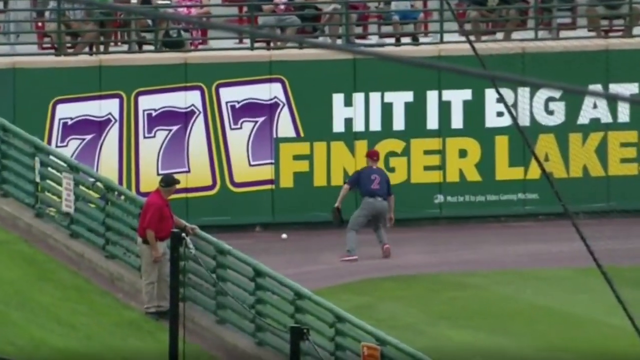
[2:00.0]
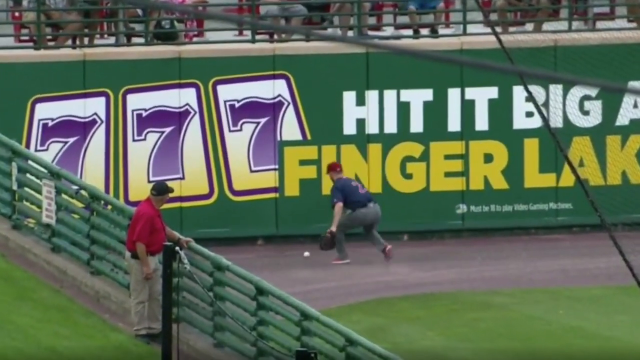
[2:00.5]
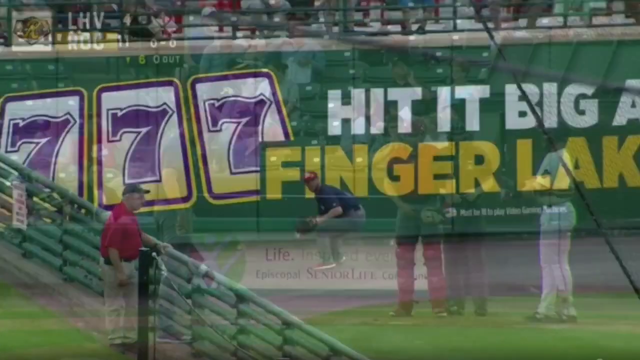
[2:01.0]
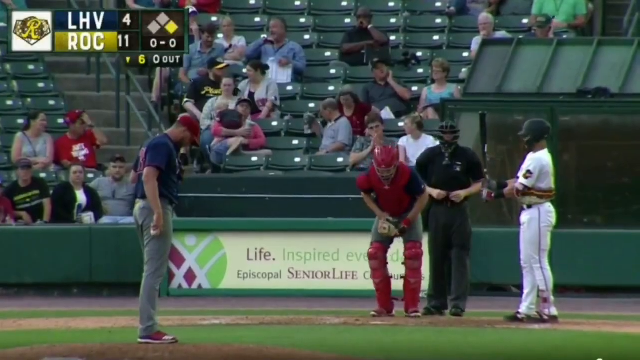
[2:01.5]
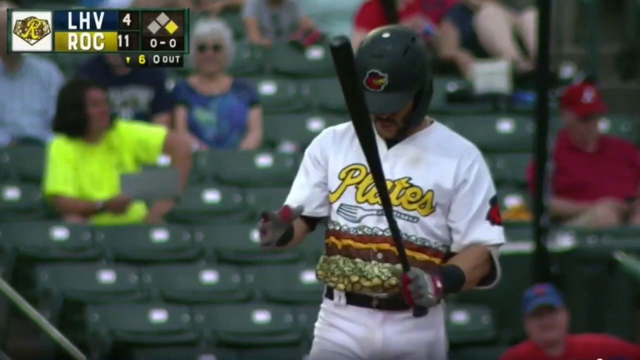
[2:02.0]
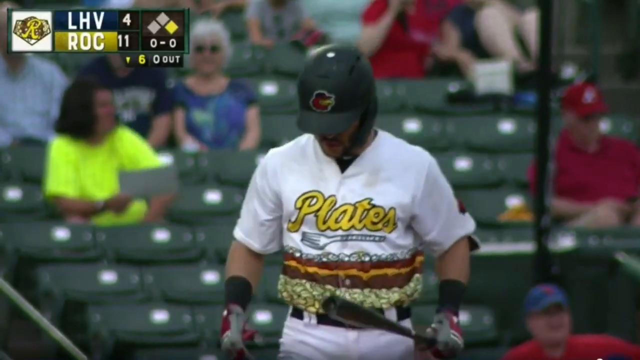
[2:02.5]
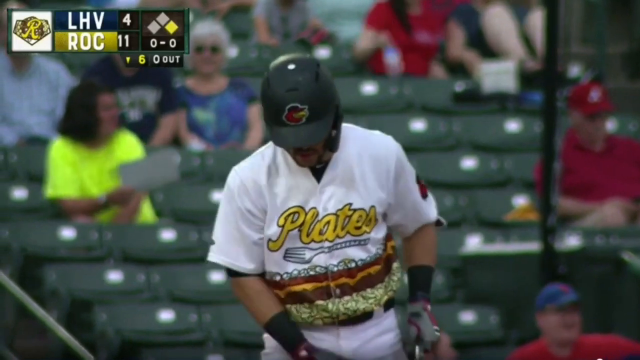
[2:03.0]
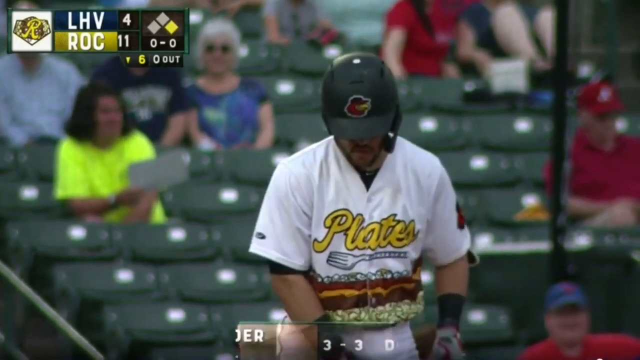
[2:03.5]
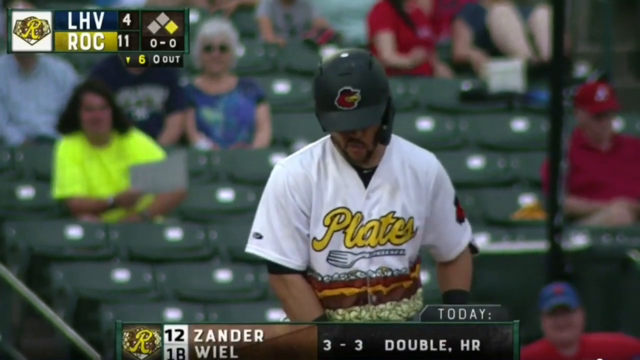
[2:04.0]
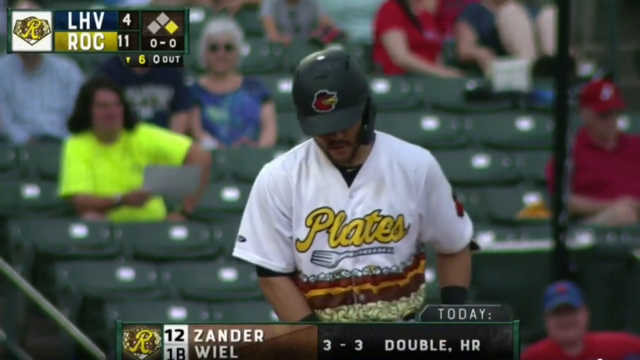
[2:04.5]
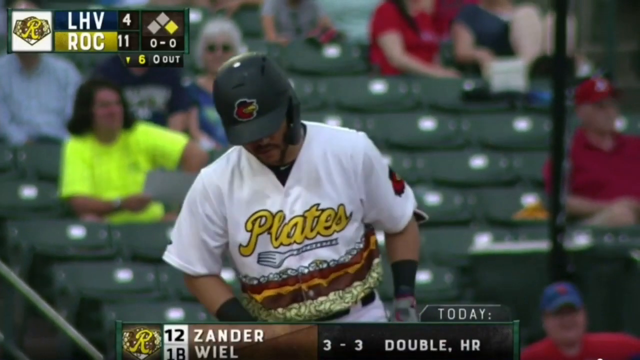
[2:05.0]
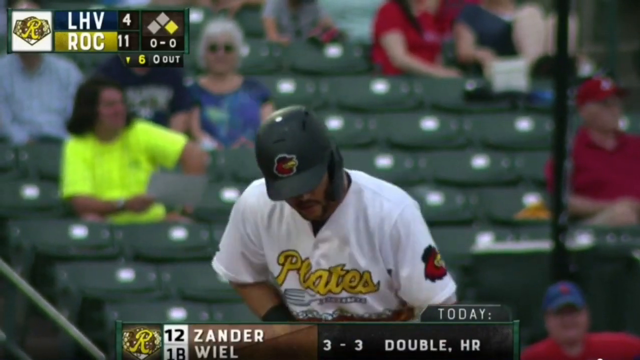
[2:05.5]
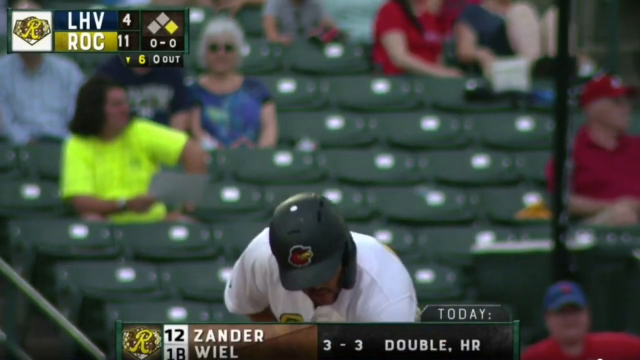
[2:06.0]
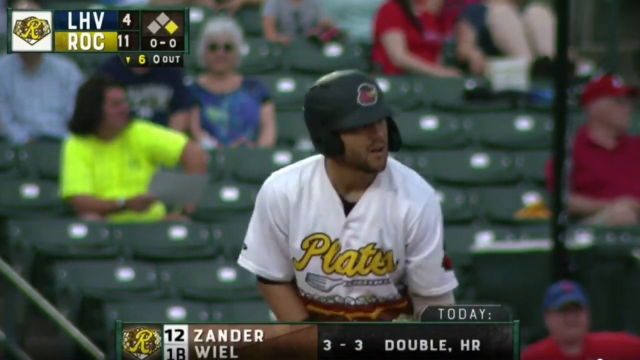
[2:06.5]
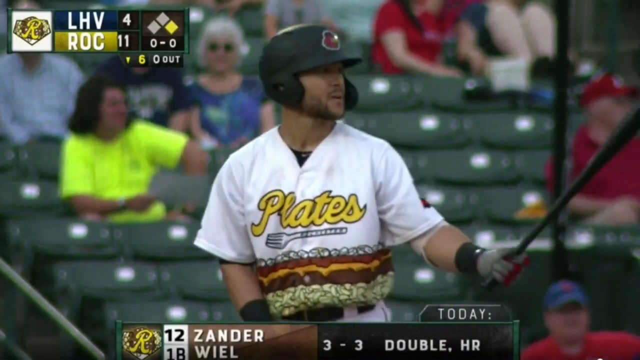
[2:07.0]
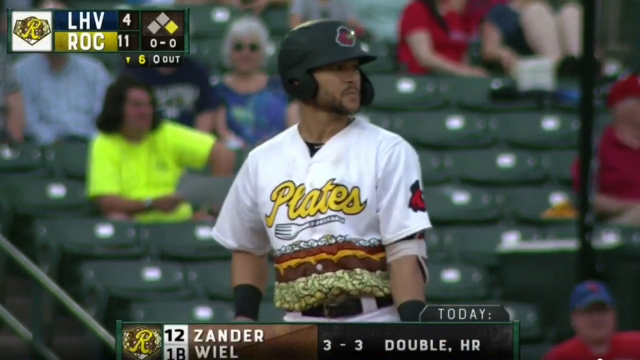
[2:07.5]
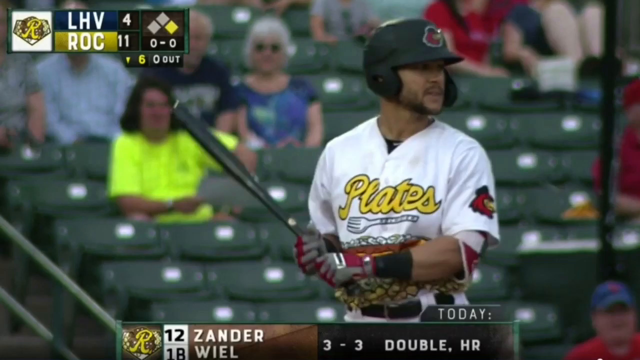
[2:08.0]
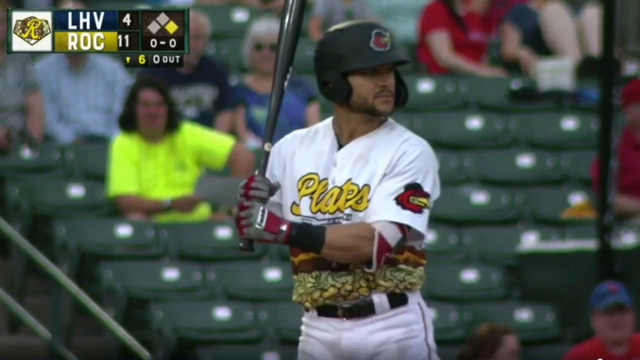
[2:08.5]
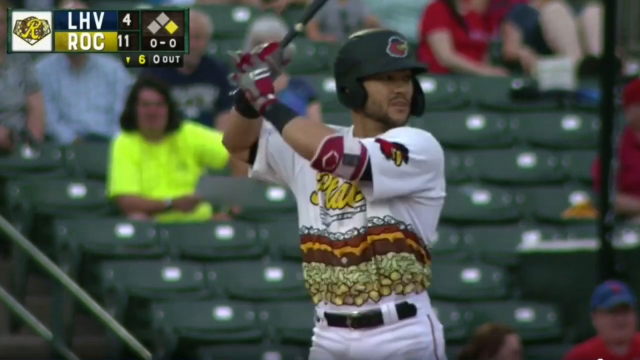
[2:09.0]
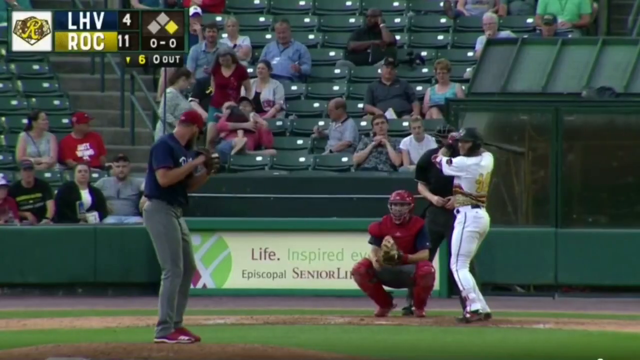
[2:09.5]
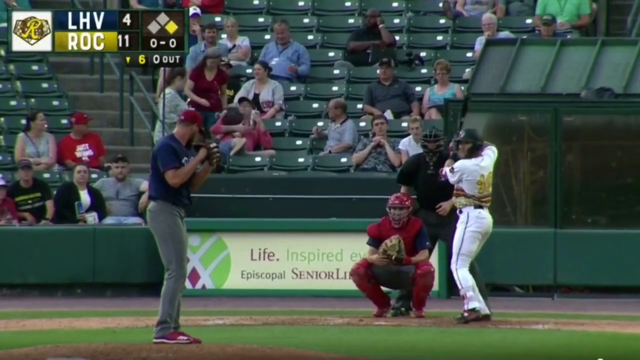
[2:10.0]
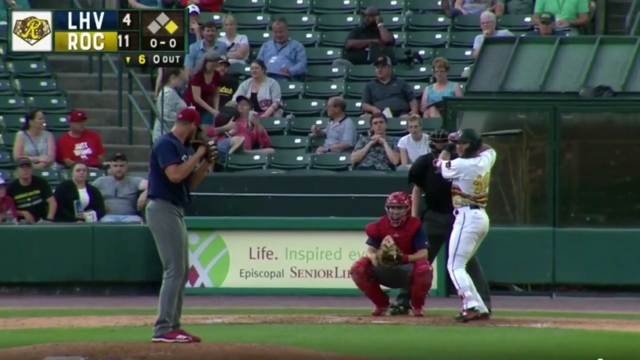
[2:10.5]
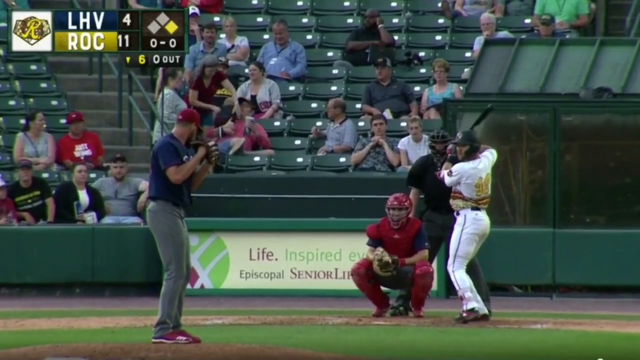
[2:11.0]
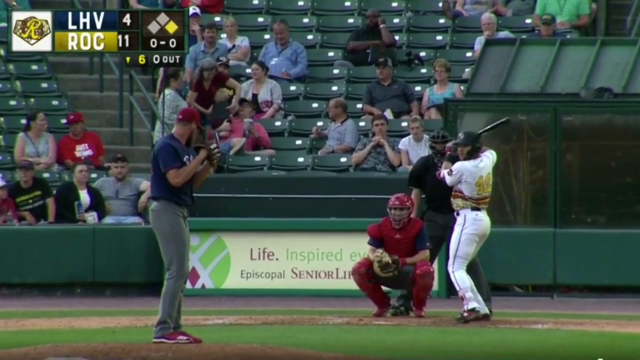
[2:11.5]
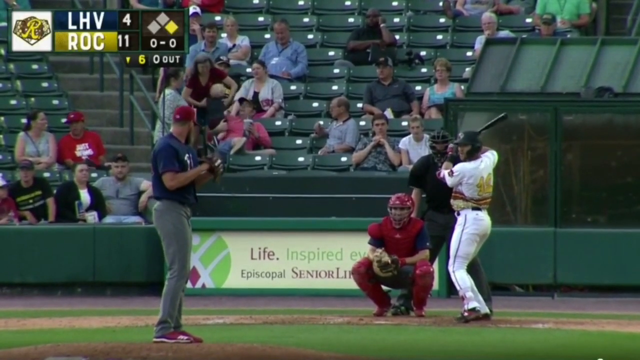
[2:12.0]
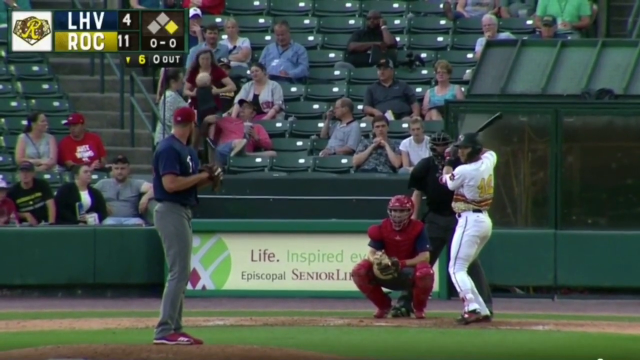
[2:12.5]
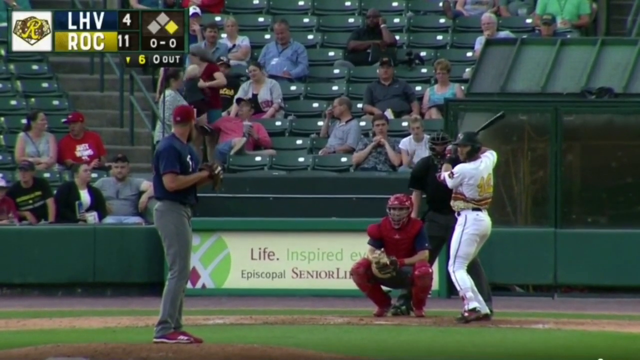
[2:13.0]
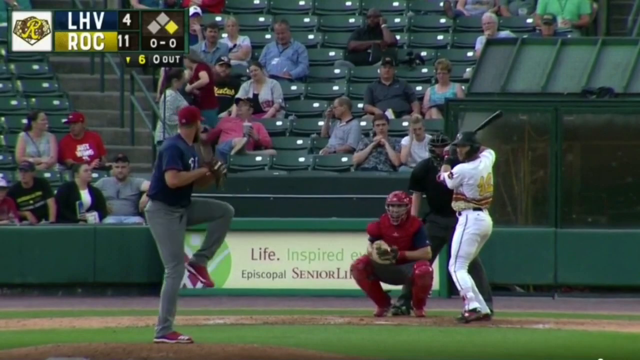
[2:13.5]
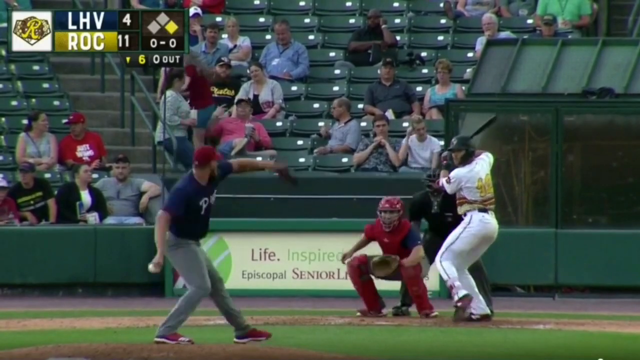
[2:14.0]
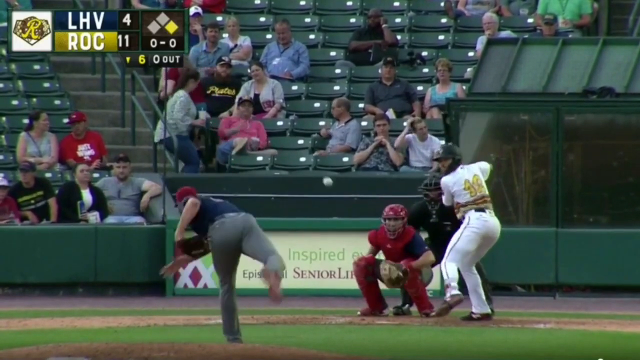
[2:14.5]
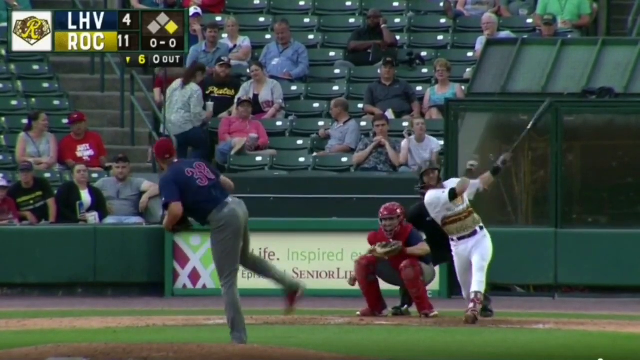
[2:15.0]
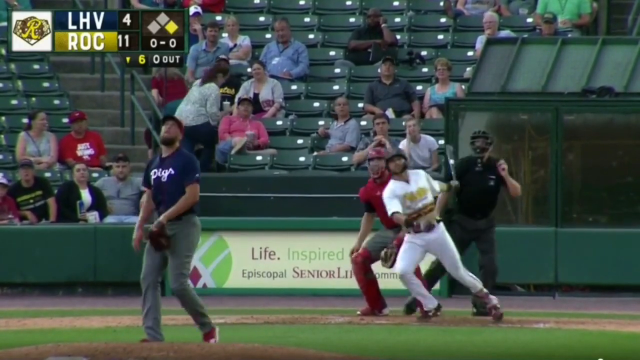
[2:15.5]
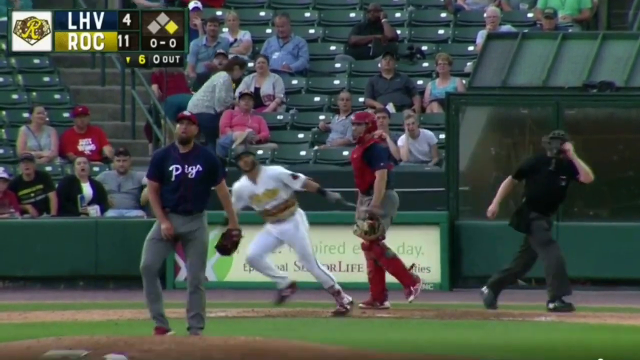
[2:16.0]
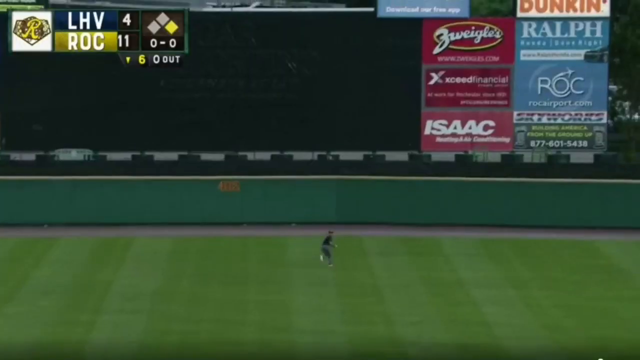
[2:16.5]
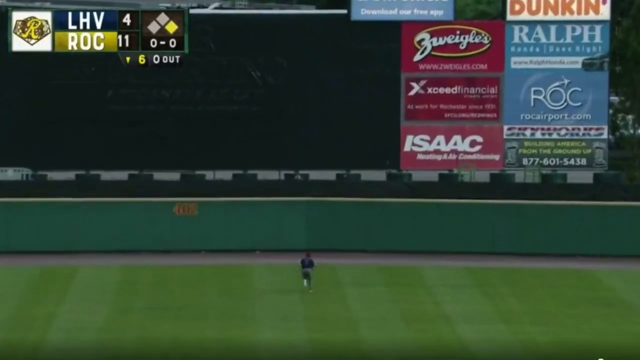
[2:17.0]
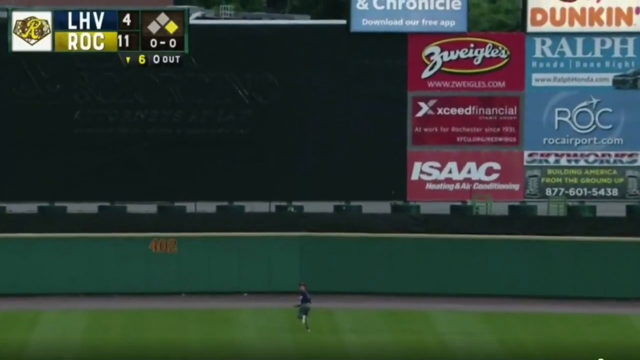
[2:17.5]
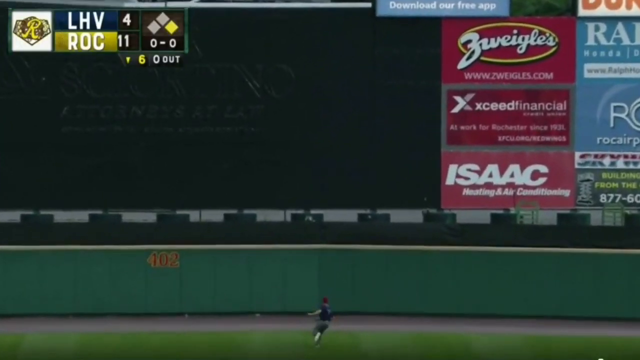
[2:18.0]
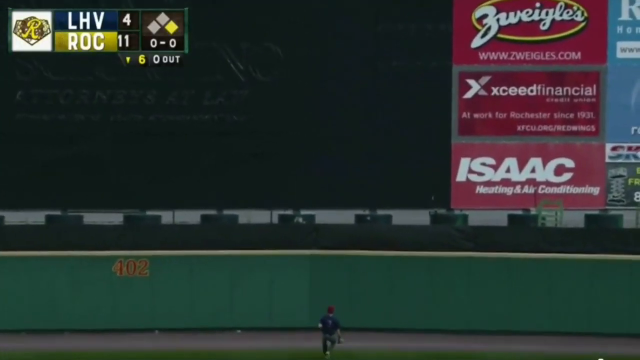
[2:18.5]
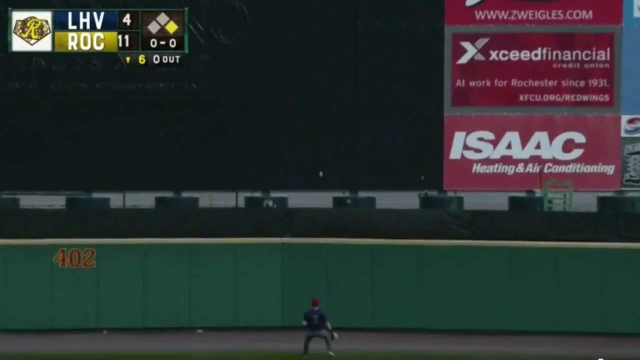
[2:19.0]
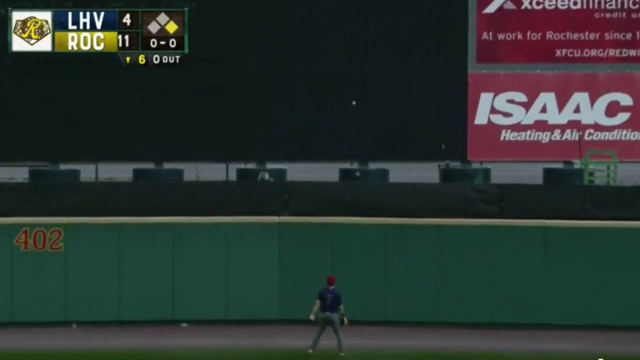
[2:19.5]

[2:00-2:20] A pitcher throws the ball and the batter hits it. In the background, text reads "hit it big at Finger Lake", along with three slots showing the number 7.